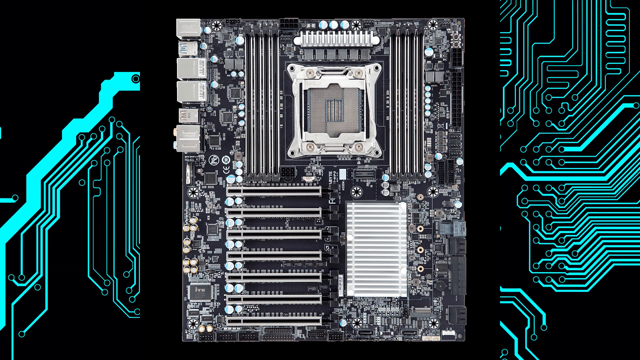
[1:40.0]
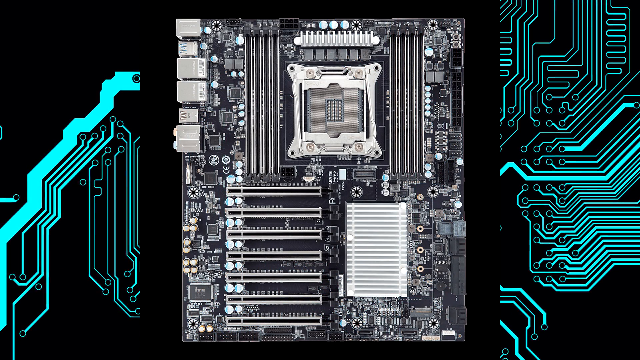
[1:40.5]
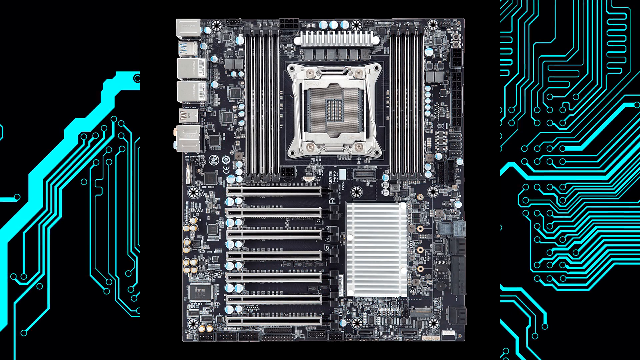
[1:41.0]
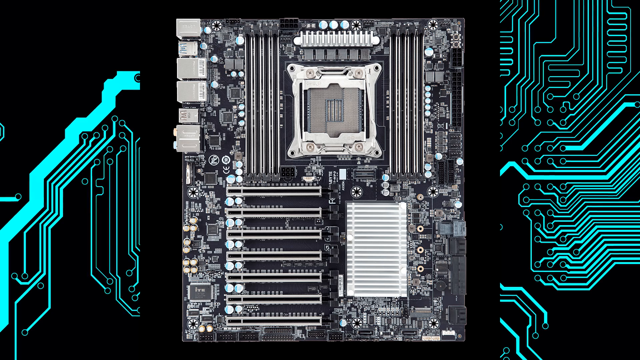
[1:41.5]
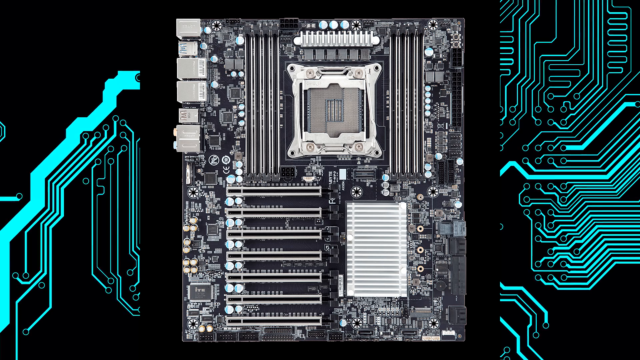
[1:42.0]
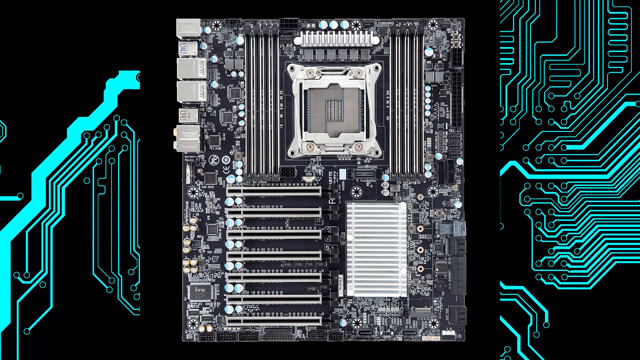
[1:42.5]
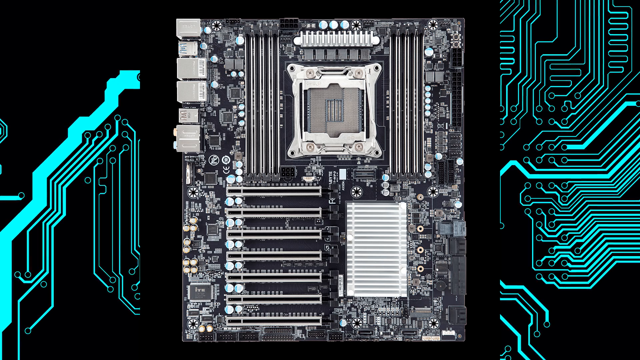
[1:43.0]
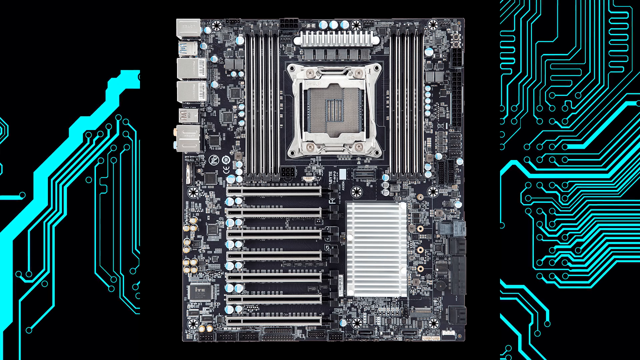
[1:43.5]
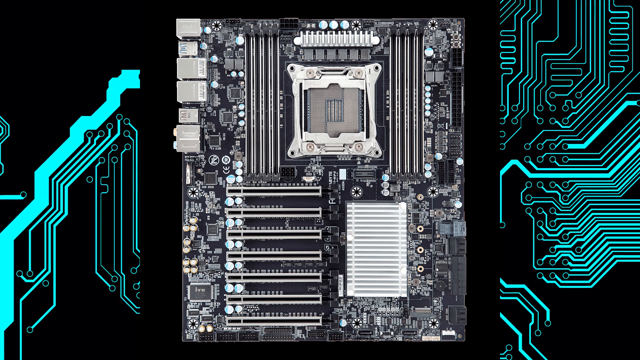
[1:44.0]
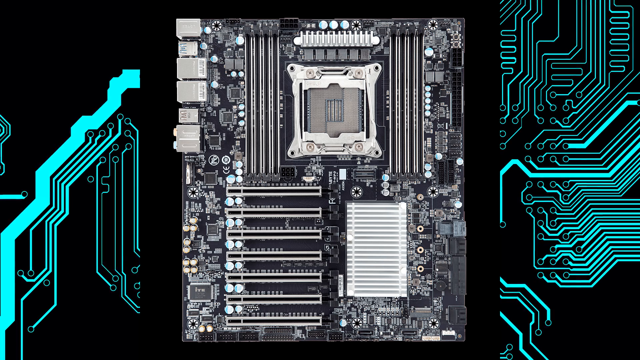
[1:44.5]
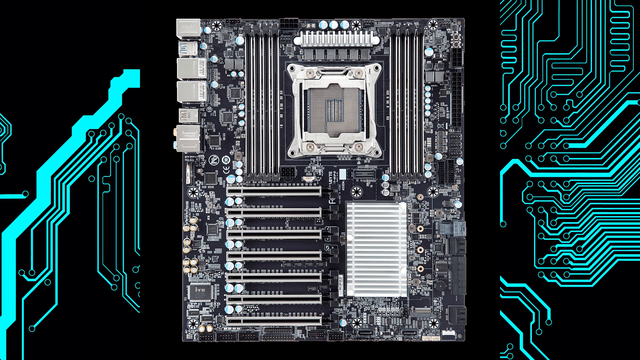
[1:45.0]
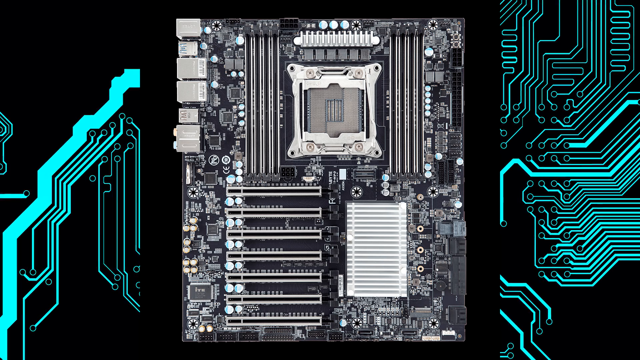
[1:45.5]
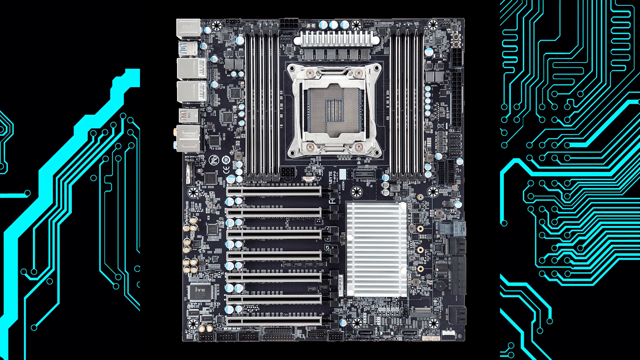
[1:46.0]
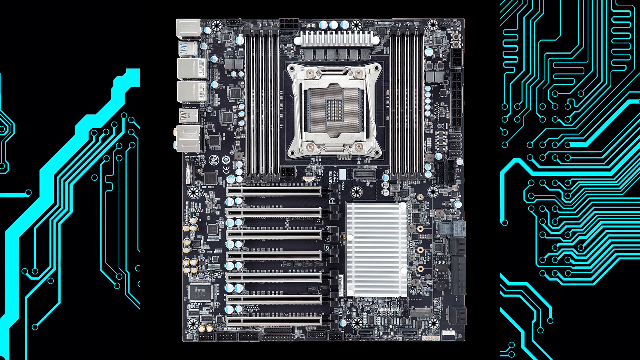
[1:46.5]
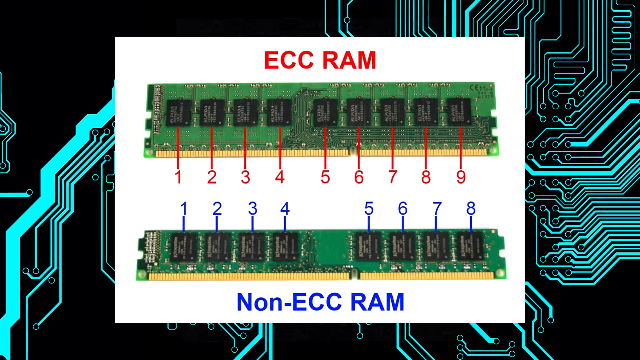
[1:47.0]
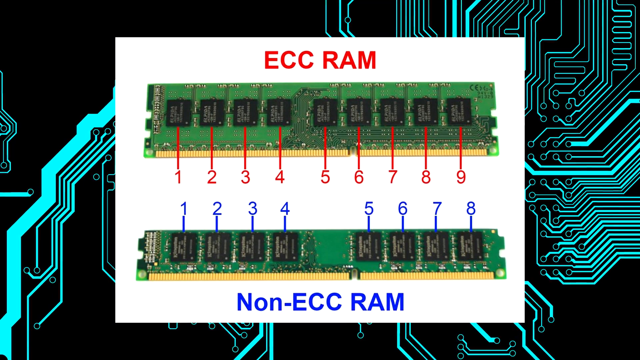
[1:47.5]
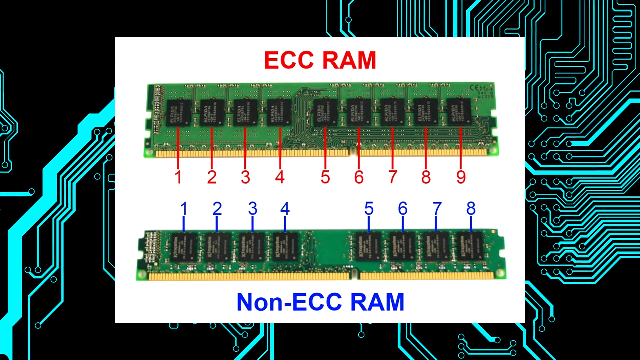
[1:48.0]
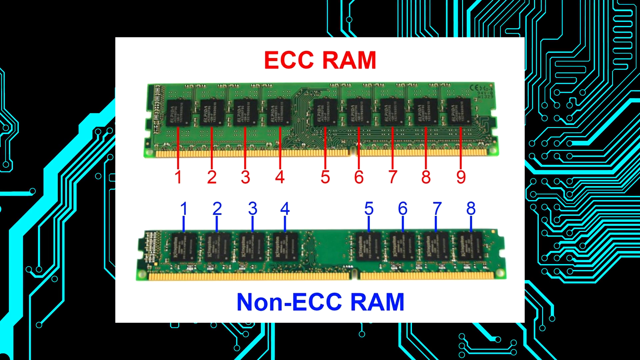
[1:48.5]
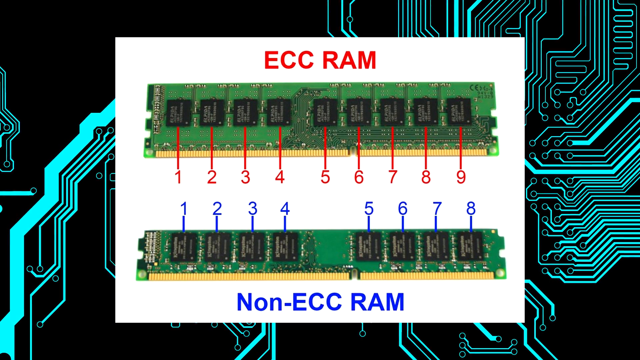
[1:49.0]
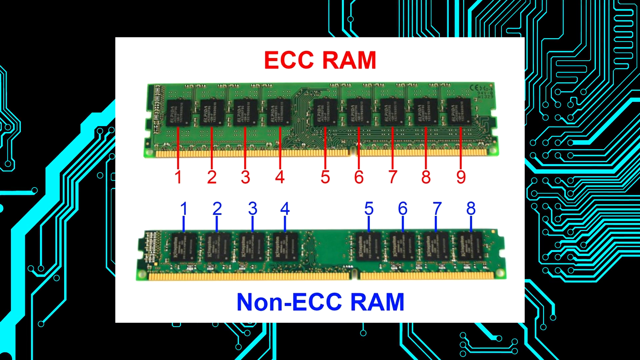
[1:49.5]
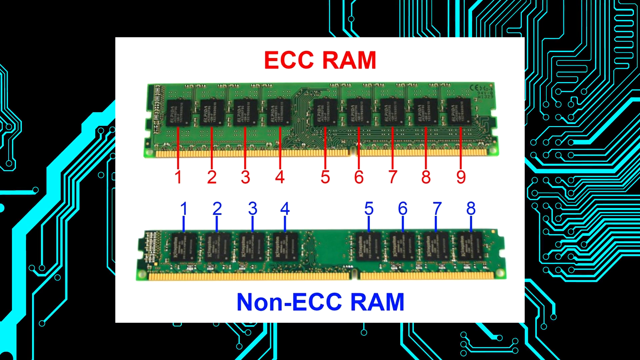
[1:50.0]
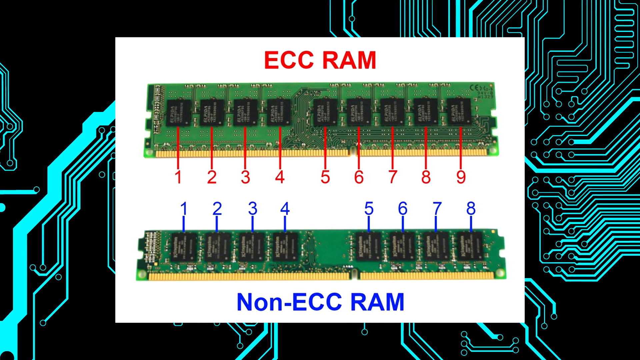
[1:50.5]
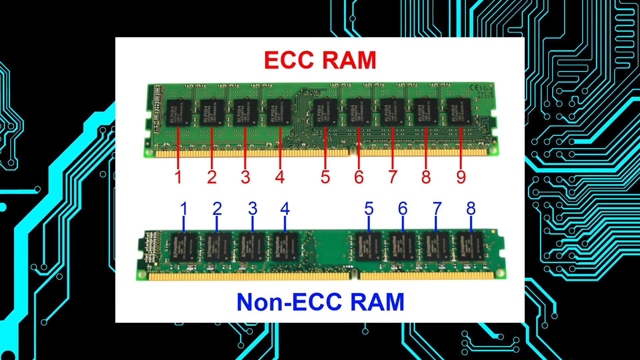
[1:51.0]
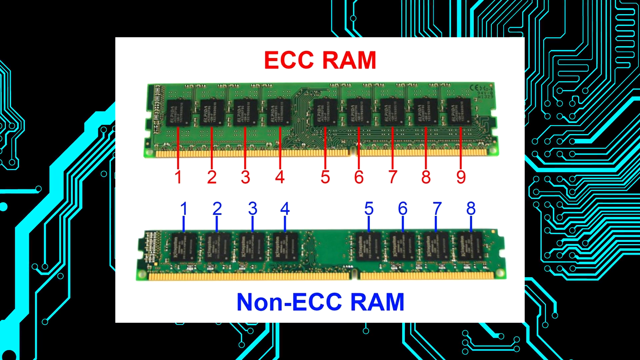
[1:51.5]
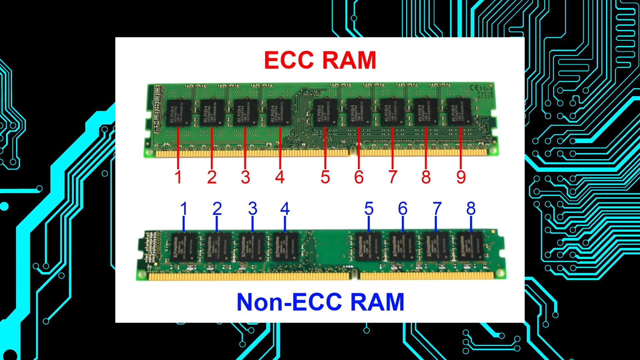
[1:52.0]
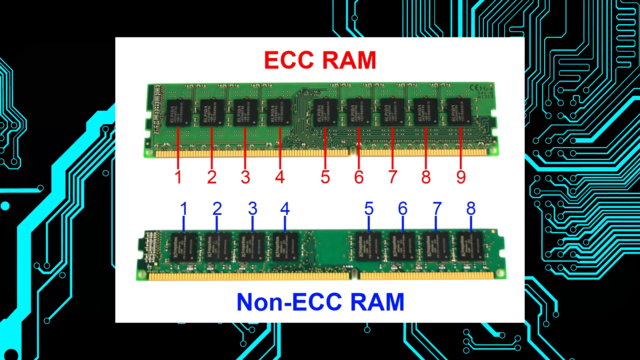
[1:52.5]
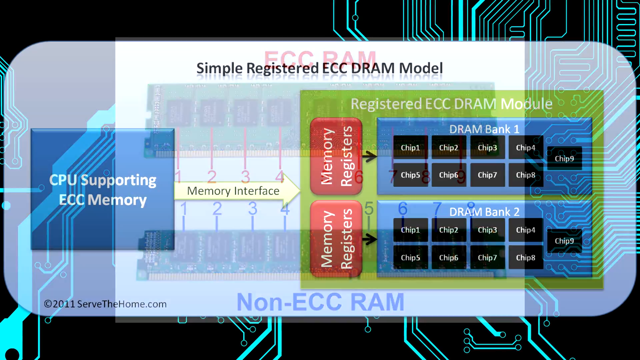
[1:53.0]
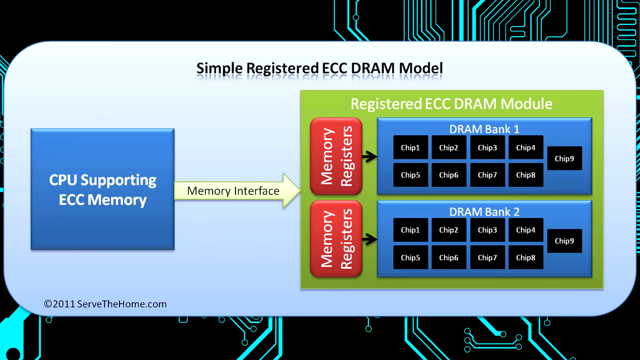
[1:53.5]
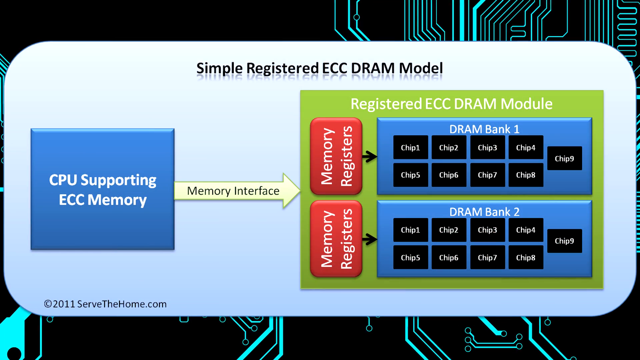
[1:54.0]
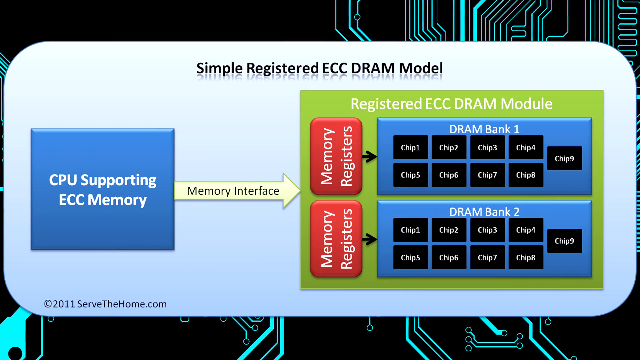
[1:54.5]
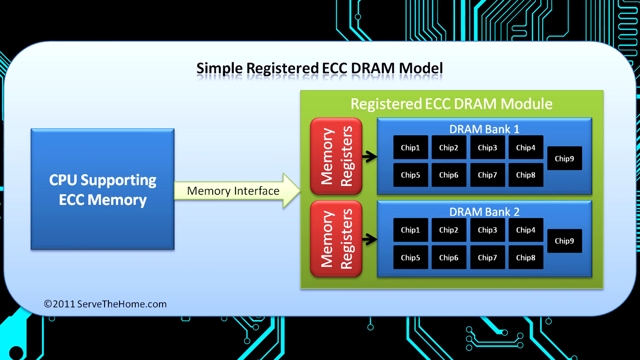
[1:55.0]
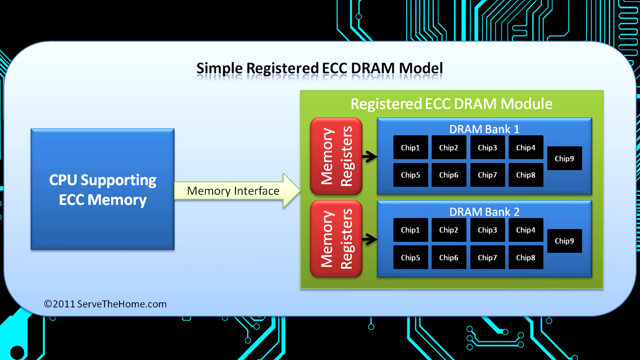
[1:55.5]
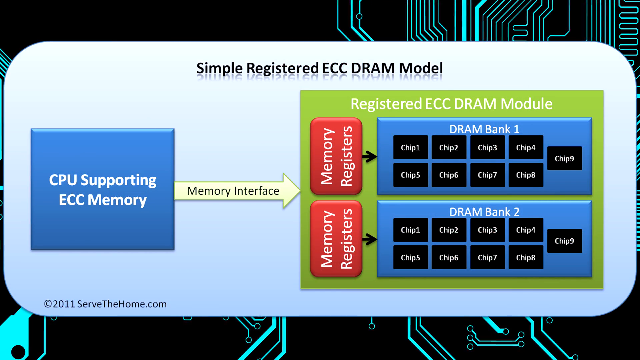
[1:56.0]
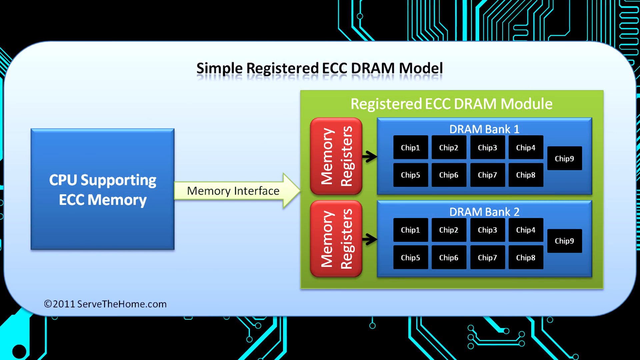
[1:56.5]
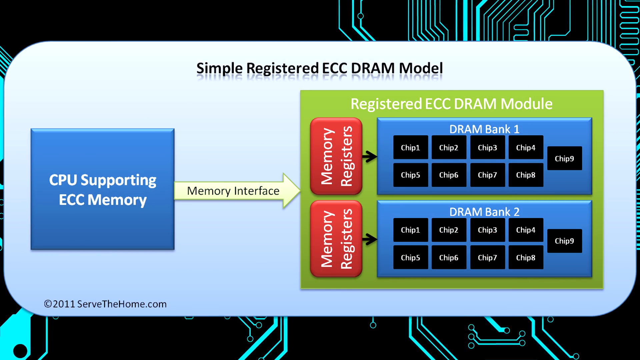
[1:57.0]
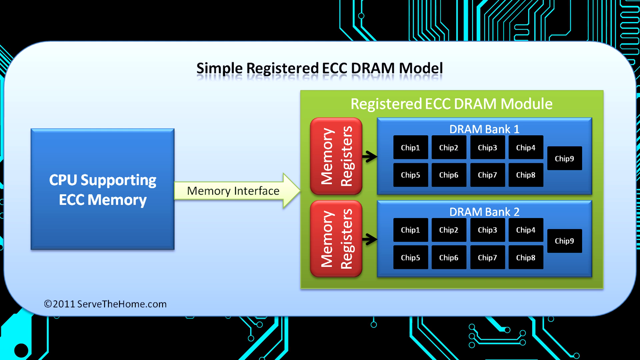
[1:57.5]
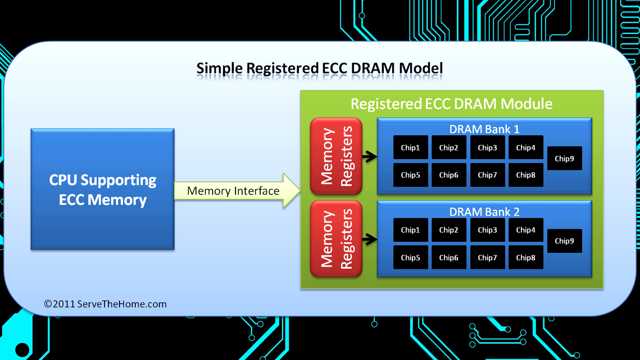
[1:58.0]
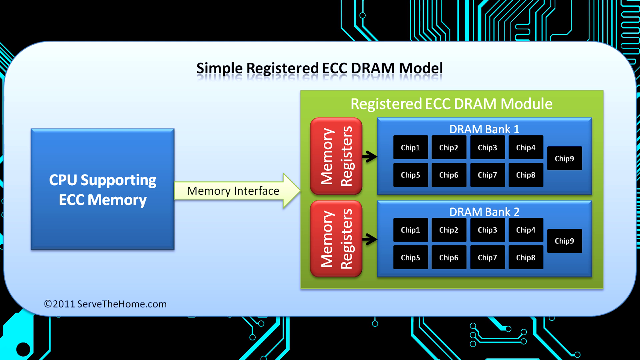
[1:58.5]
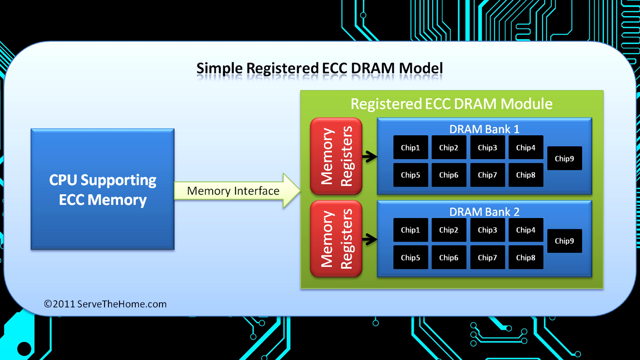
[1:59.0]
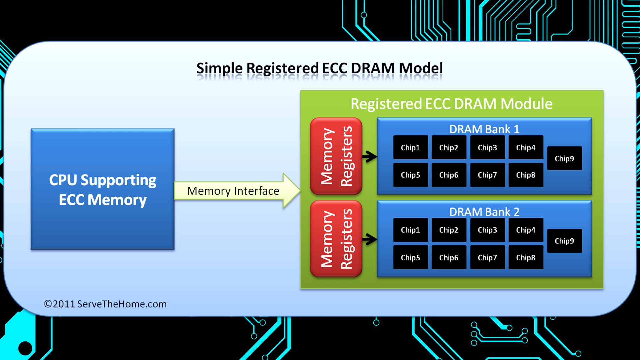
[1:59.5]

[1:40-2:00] The inside of the processor is visible, gray and silver with all the chips, wiring, and detail of its various parts, superimposed on the screen in a gray, silver, and black tone. Then "ECC RAM" flashes in red at the top with nine ports highlighted by lines numbered one through nine, and at the bottom "non-ECC RAM" appears in blue with eight ports highlighted in blue, numbered one through eight. This is on a white backdrop superimposed over the Tron-like graphic. Another tab then comes up reading "simple registered ECC DRAM model" and "CPU supporting ECC memory", with some information on the module flashed on the screen.